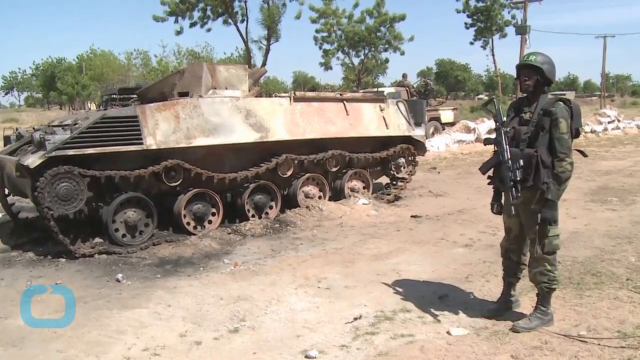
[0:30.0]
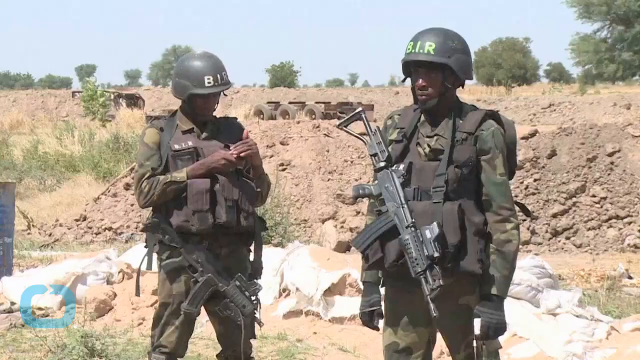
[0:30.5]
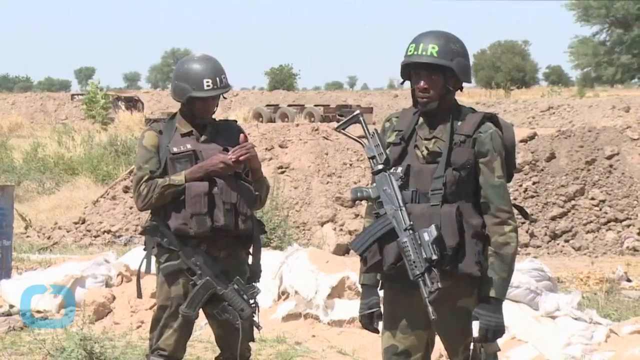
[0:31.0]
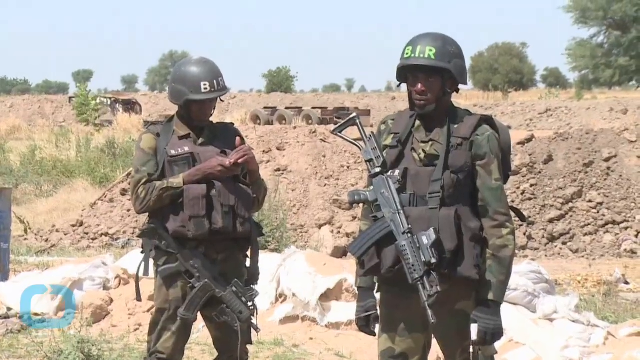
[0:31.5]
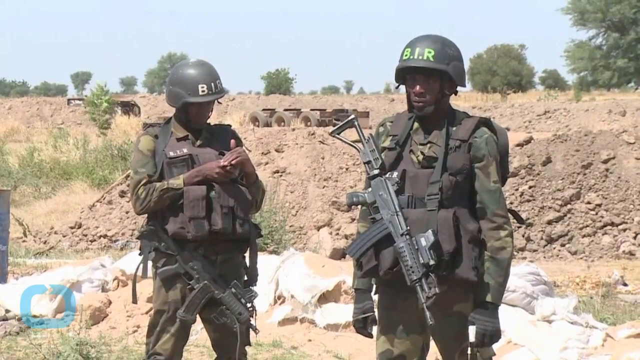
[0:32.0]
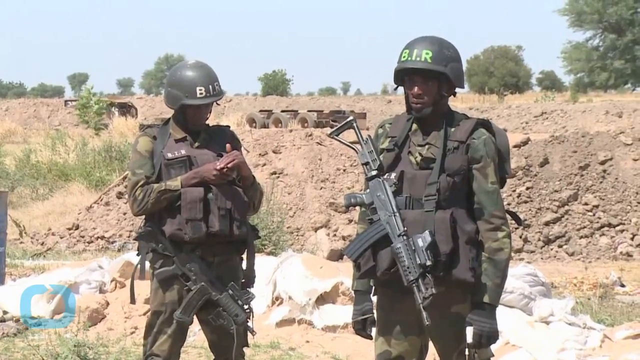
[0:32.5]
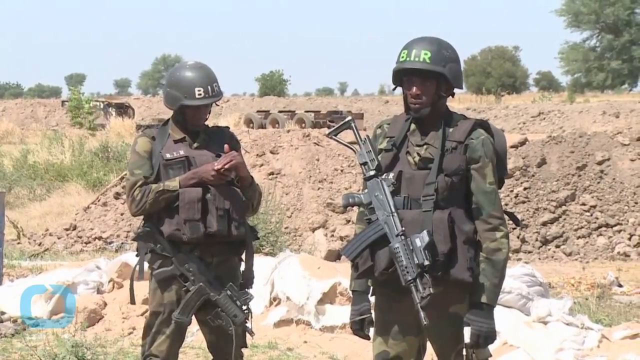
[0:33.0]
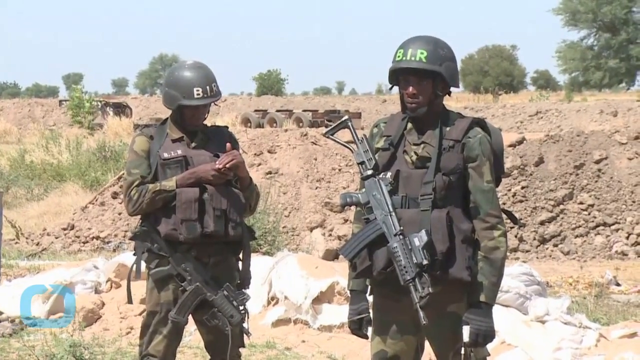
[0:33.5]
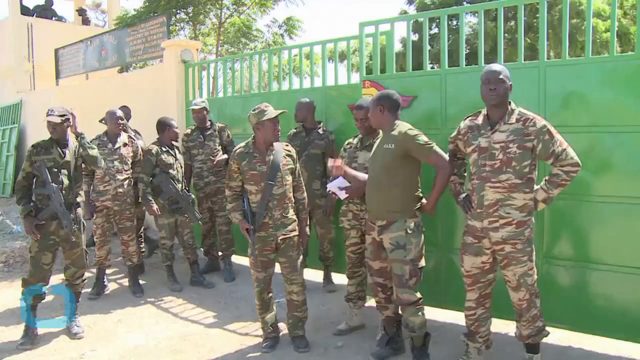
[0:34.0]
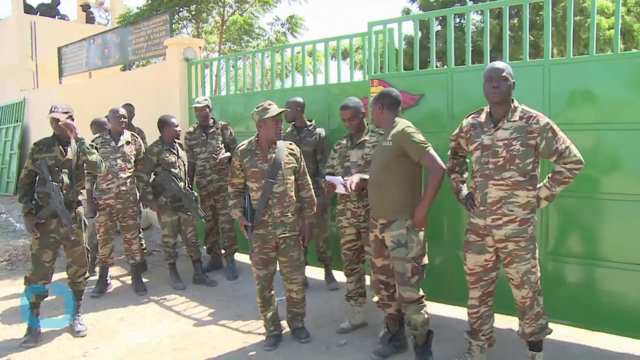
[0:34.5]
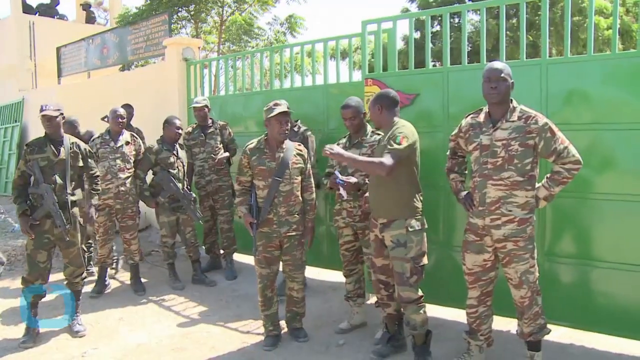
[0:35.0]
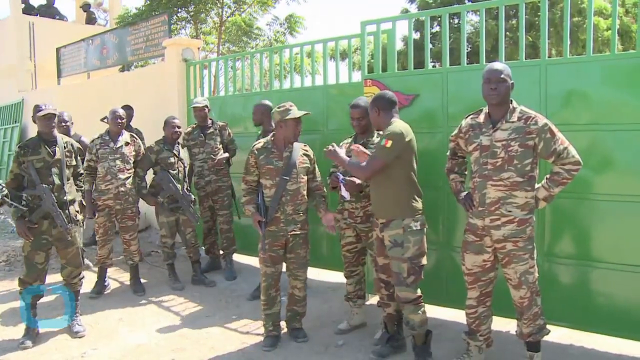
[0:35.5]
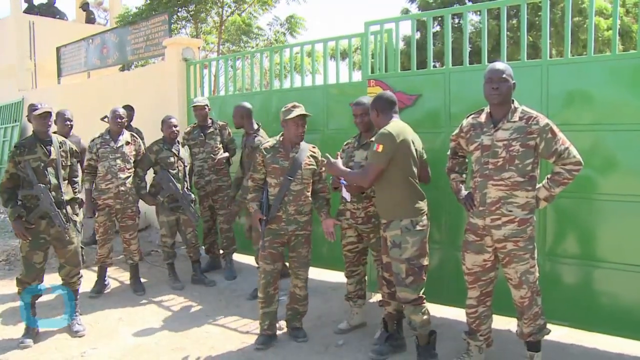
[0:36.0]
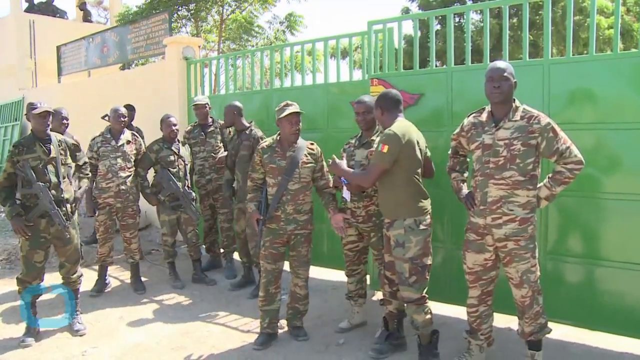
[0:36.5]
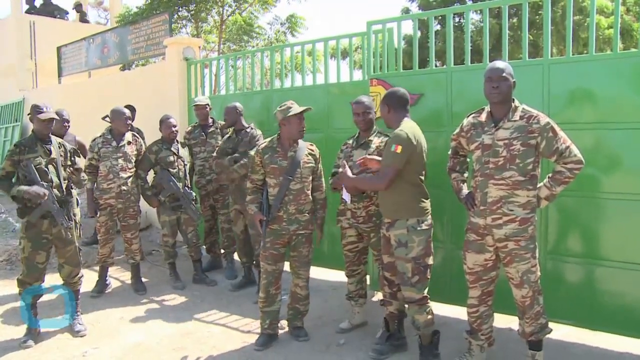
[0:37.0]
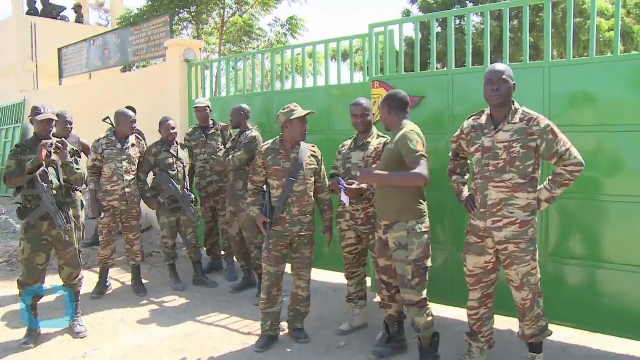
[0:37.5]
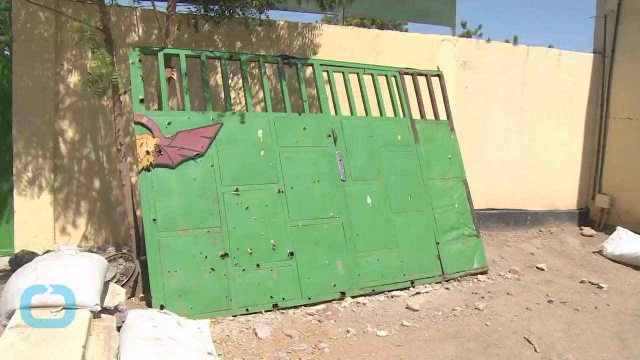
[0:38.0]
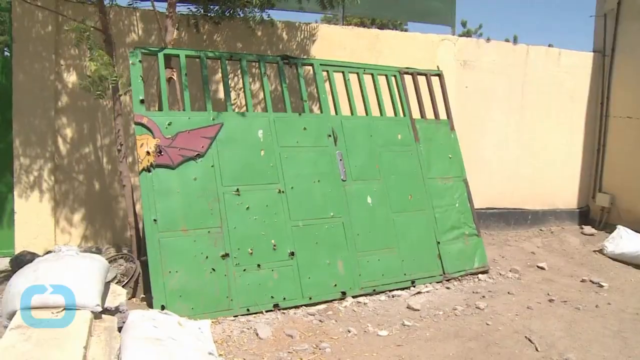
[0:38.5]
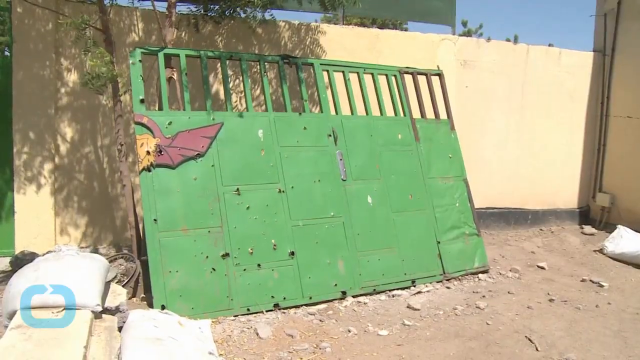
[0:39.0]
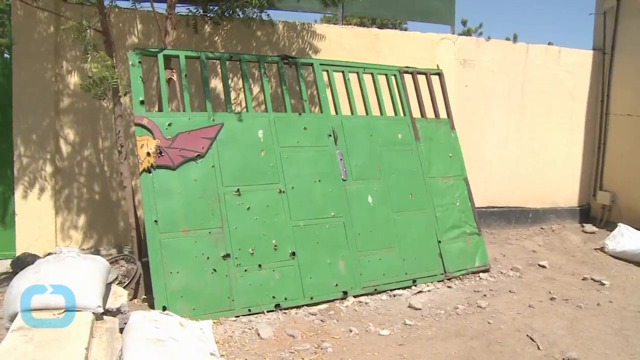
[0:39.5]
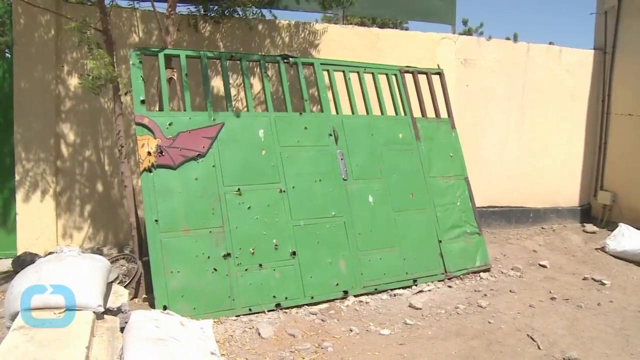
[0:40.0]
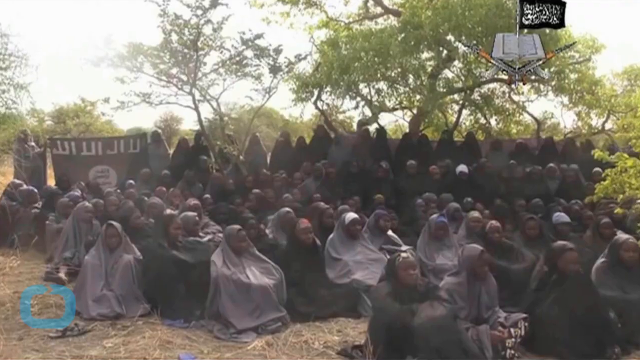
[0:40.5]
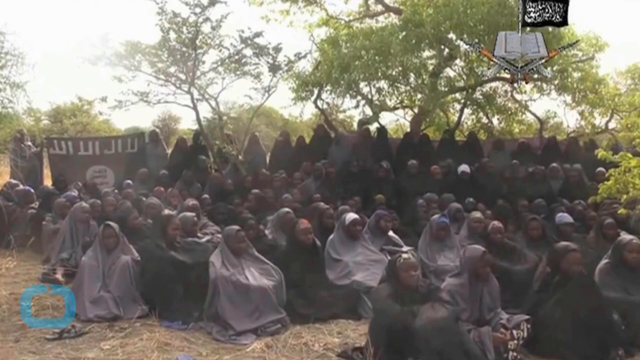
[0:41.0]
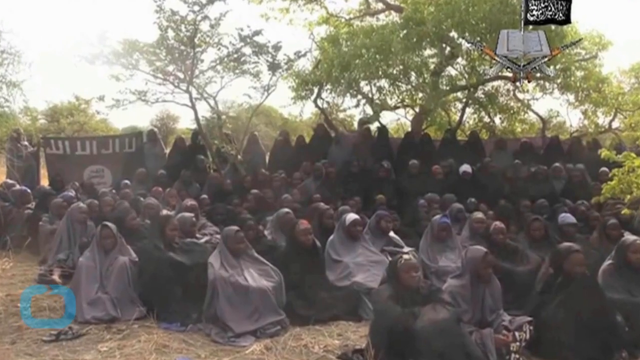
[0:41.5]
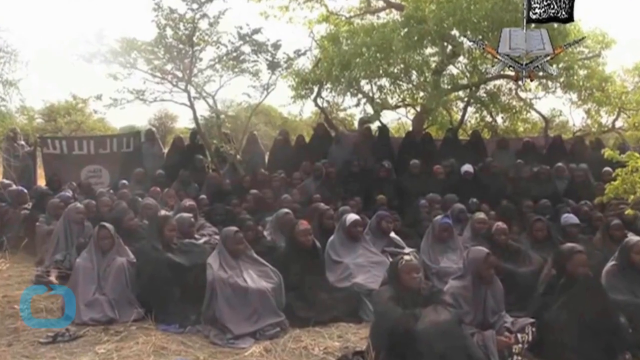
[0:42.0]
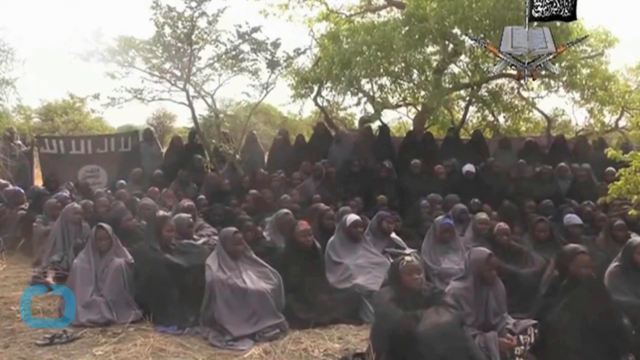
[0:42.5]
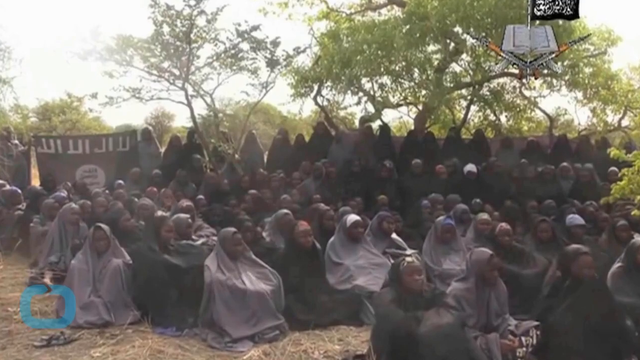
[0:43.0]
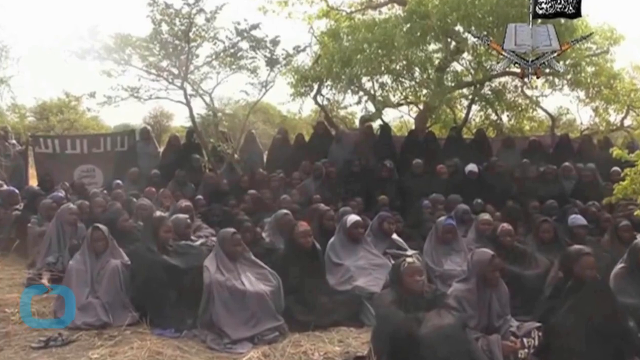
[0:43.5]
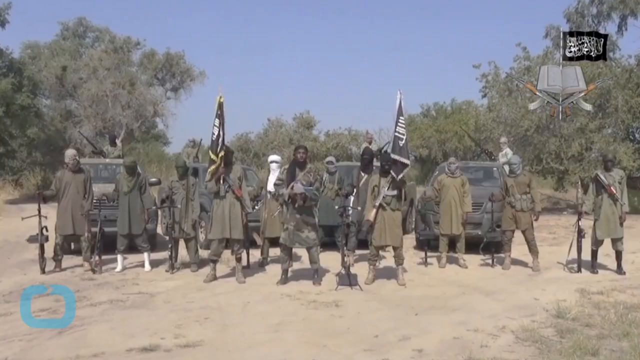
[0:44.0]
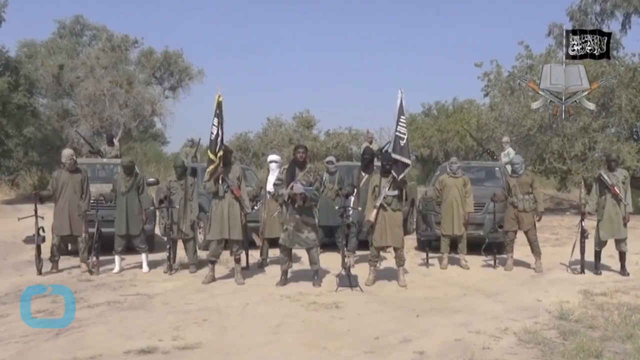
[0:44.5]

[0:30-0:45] The tank appears, then two different soldiers who look more modern and better dressed, with "BIR" on their hard hats. About a dozen soldiers stand in front of a green gate, like that of a walled city; a piece of the gate appears to have been ripped off and is laying up against a wall in another area, and that removed piece has bullet holes in it. A group of probably 30 or 40 people is shown, some seated and those in the back standing, wearing what look like burkas; it is unclear whether this is a religious or a military meeting. The group of soldiers who were standing is shown giving out orders, apparently what was written on the paper. The ground is sandy, dry and rocky.